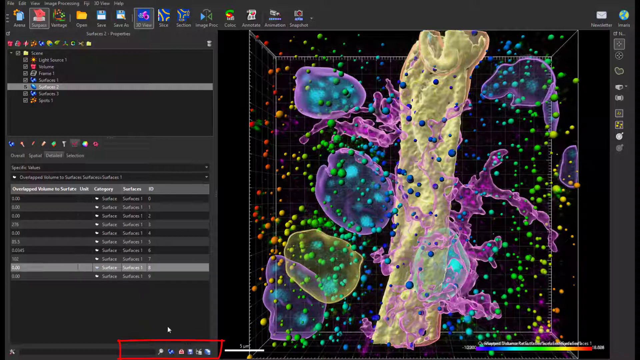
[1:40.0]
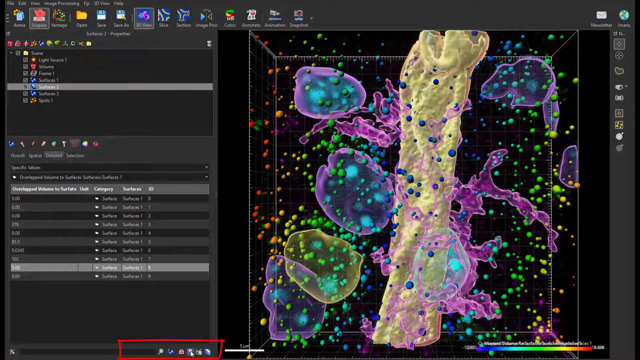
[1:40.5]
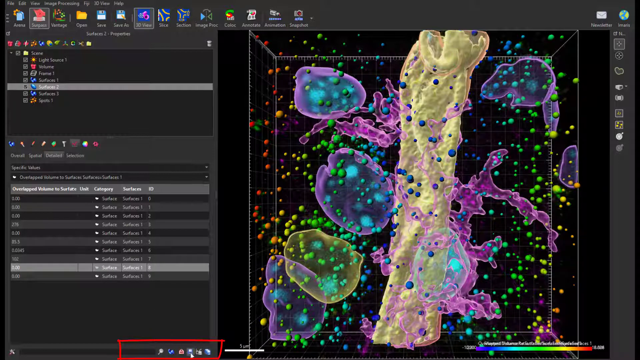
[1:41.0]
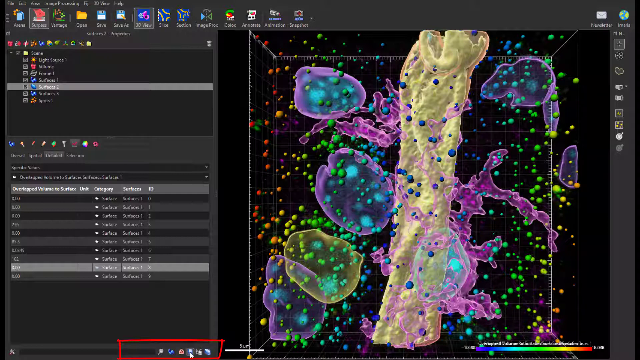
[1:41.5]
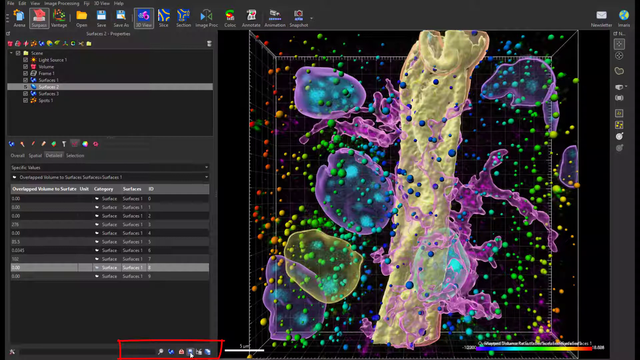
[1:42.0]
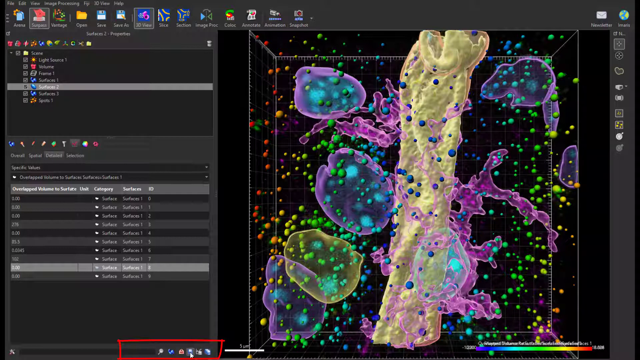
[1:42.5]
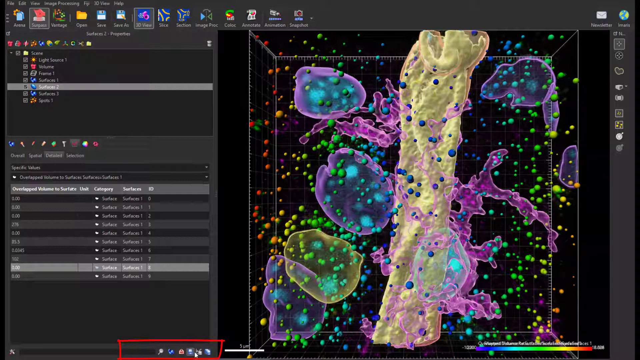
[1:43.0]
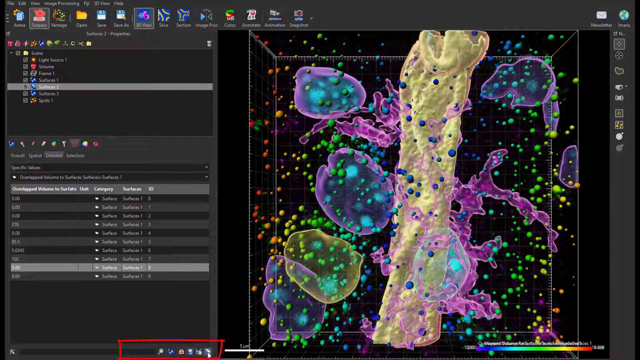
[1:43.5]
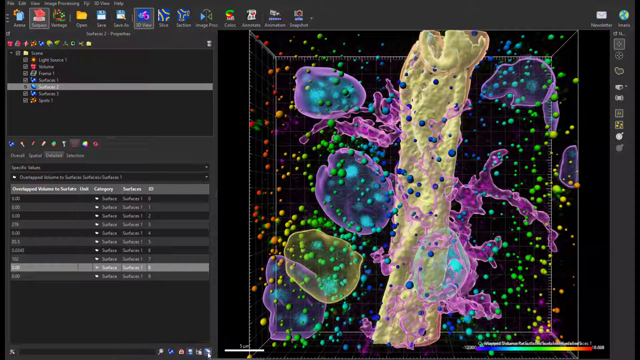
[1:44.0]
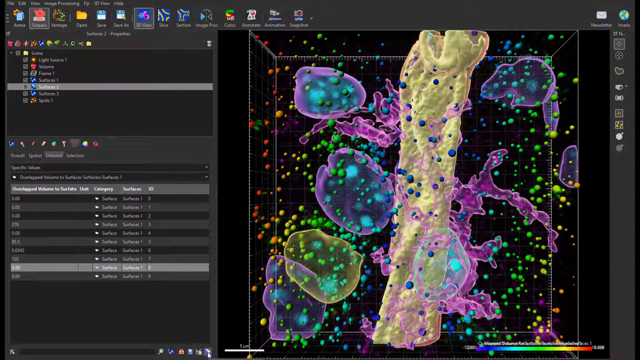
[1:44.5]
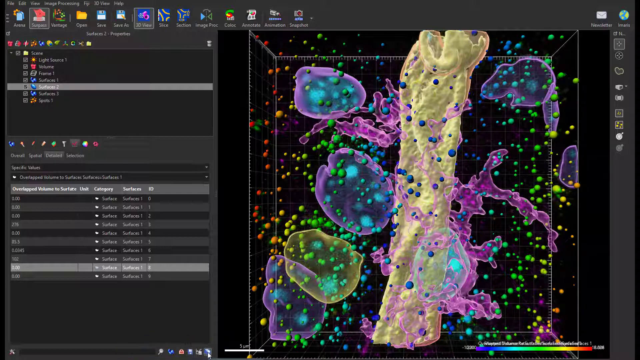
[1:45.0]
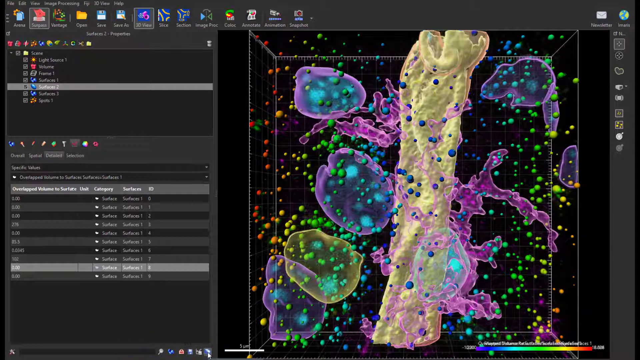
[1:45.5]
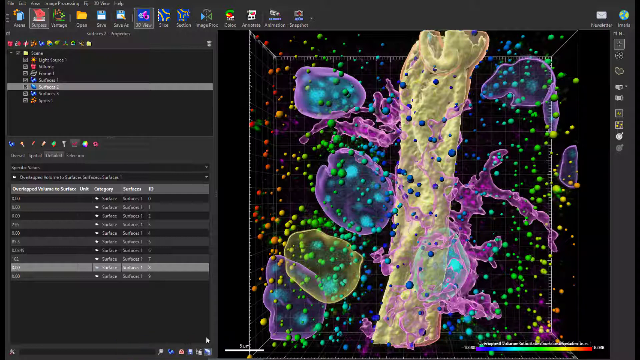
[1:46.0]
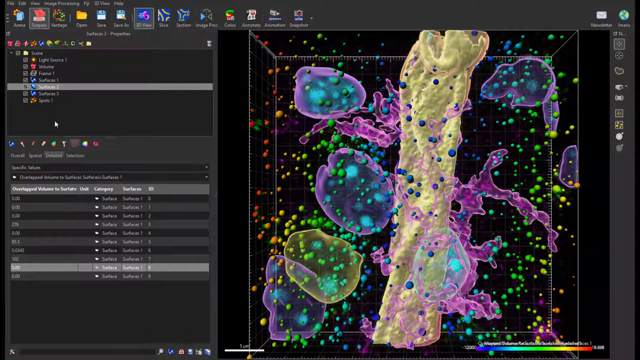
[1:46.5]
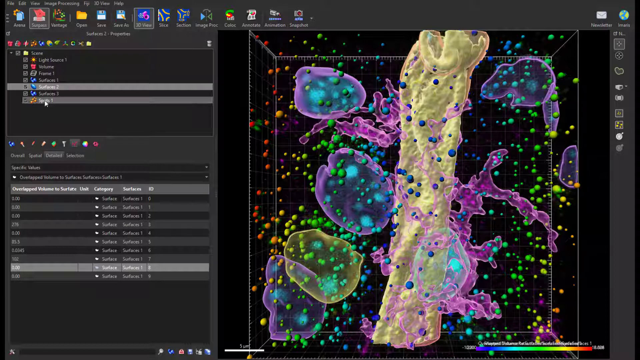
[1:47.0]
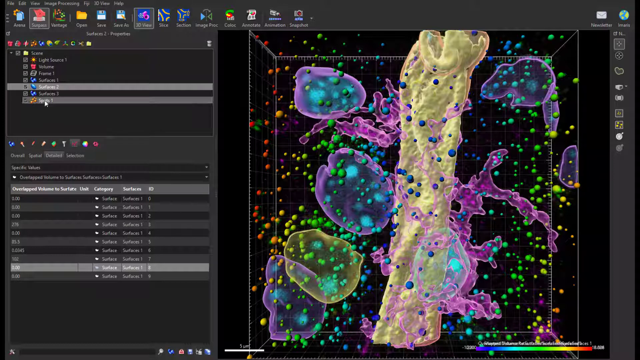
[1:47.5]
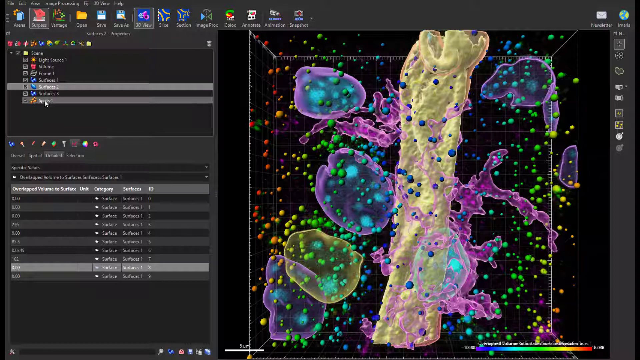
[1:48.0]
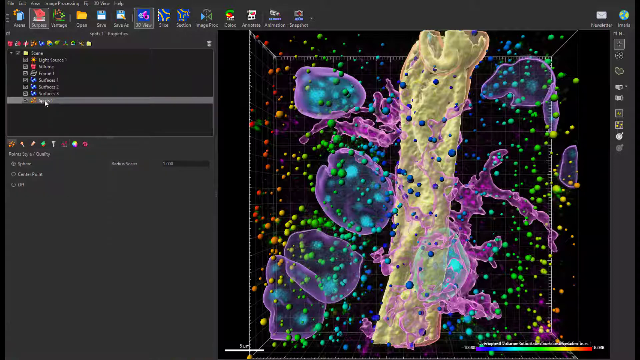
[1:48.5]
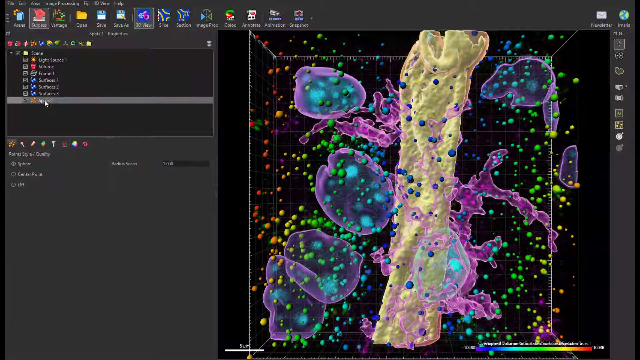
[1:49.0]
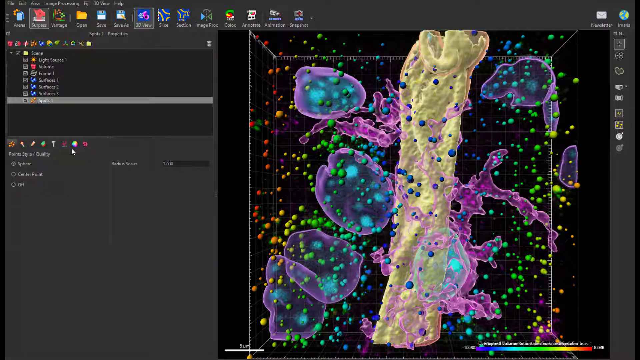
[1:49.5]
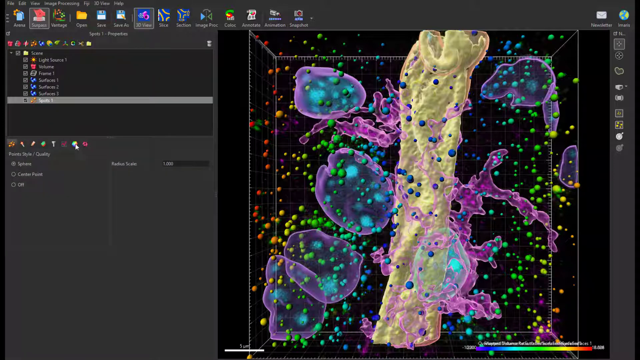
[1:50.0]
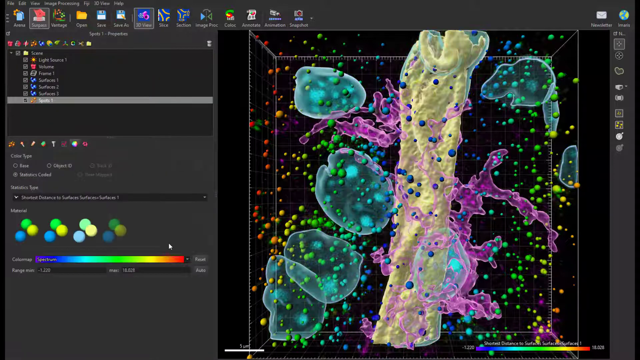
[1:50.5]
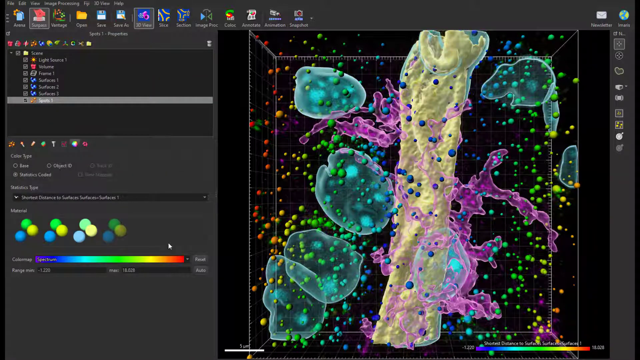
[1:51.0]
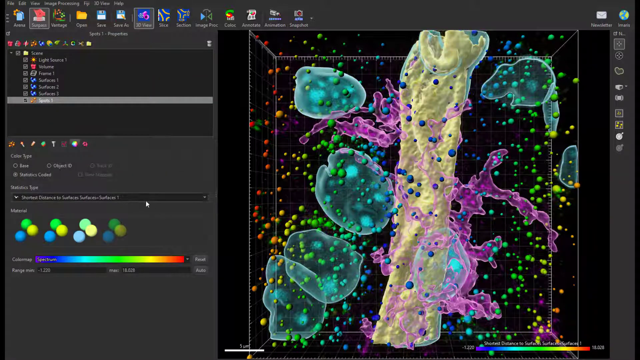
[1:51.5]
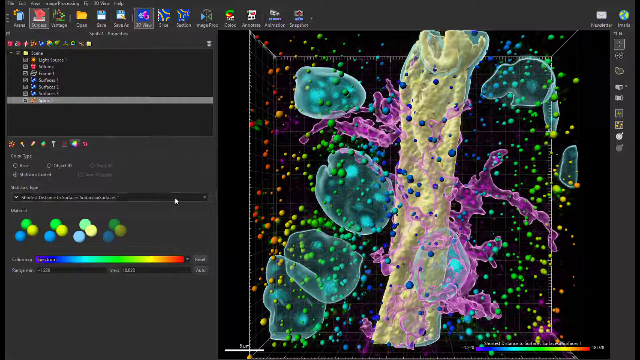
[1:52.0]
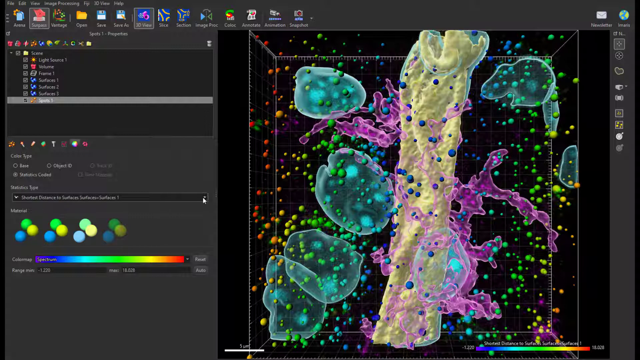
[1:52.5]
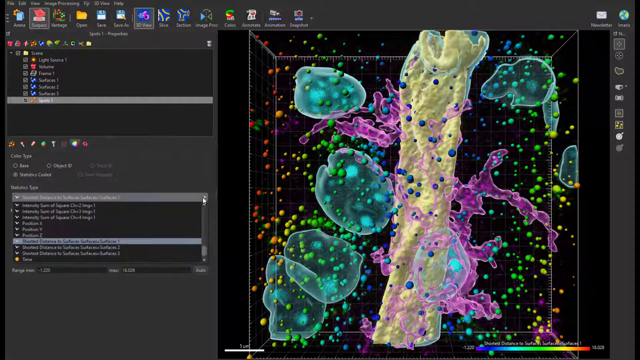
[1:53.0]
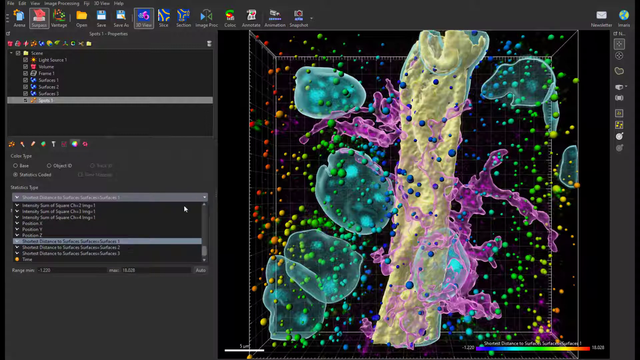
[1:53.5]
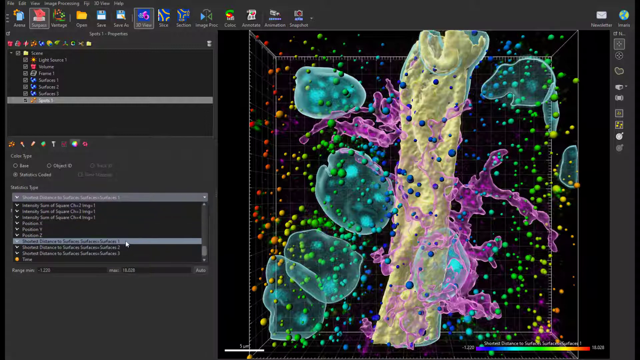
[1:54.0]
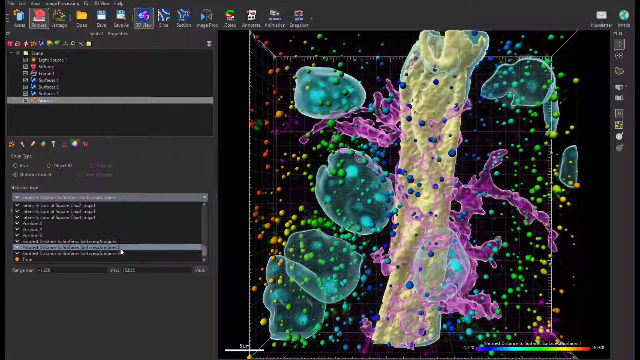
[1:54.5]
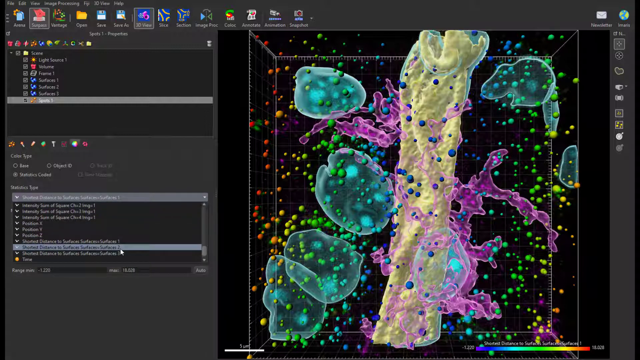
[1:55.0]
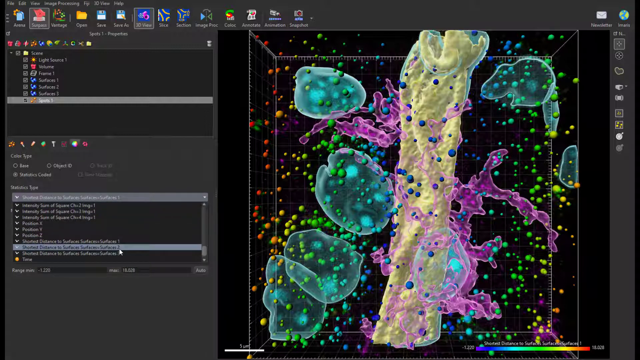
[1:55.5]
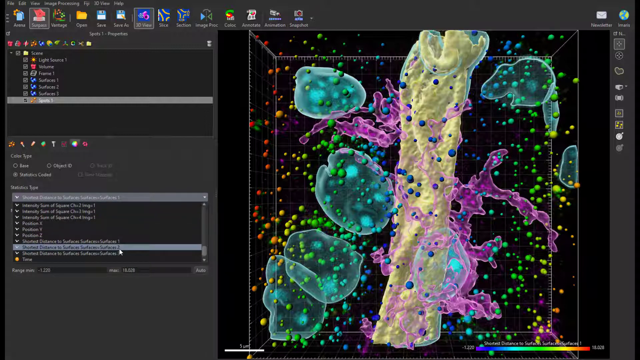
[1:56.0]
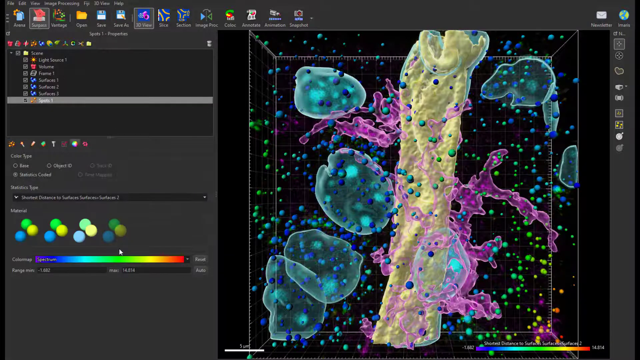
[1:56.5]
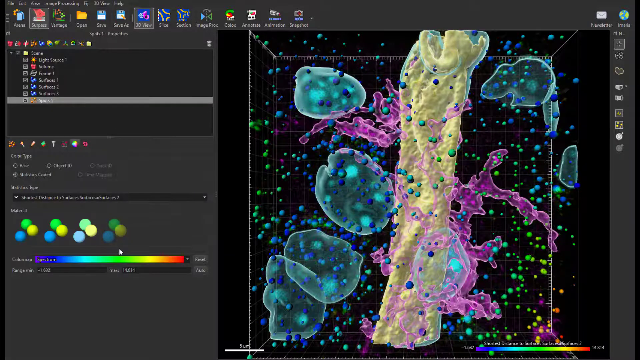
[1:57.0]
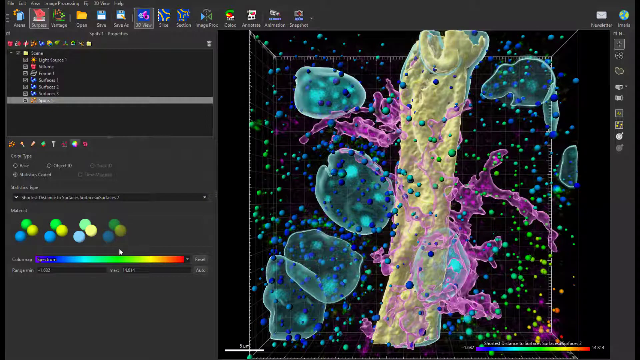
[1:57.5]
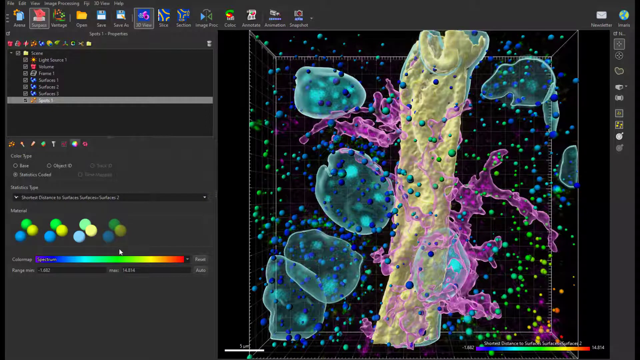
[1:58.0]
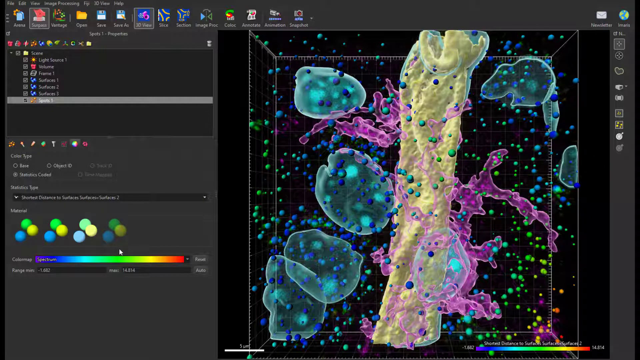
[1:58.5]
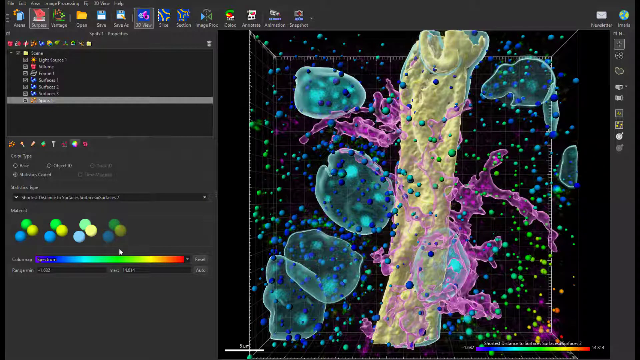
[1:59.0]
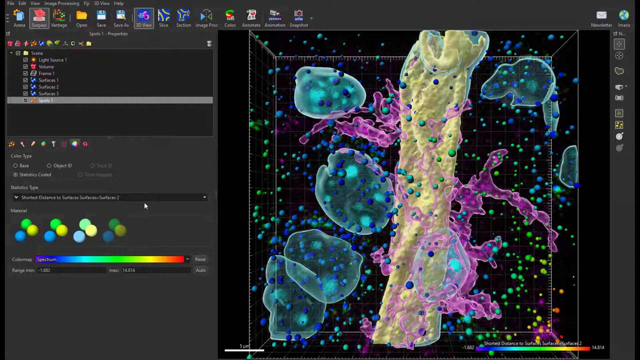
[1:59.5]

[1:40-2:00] On the left side, someone uses the mouse pointer to edit the image displayed on the right side of the screen. A range of color appears, and they seem to be trying to change the color of something, but it happens very quickly. Nothing is highlighted in yellow, and it is unclear what is being changed. A drop box is labeled "statistics type." Its options include "shortest distance to services, services = services 2," which the pointer looks like it is about to click on. Below are "intensity sum of square ch = 2, lmg = 1," "intensity sum of square ch = 3, lmg = 1," "intensity sum of square ch = 4, lmg = 1," "position x," "position y," "position z," and "shortest distance to surface, surfaces = surface 1."